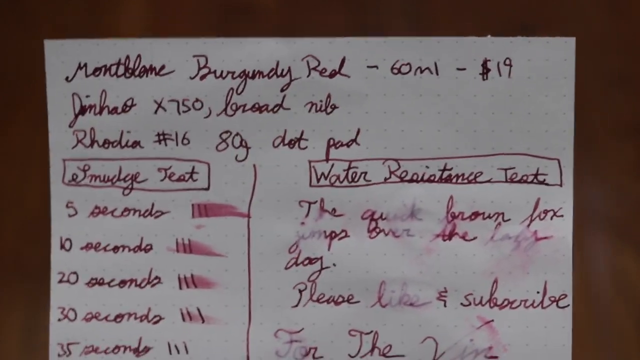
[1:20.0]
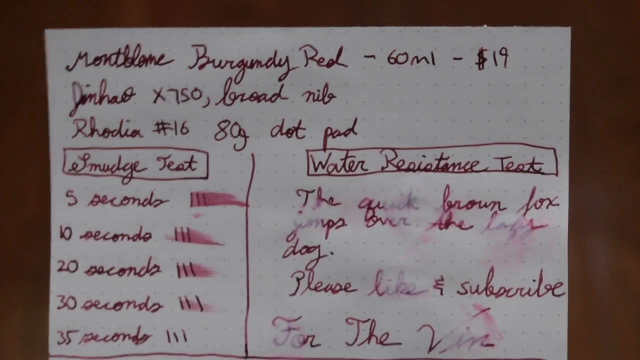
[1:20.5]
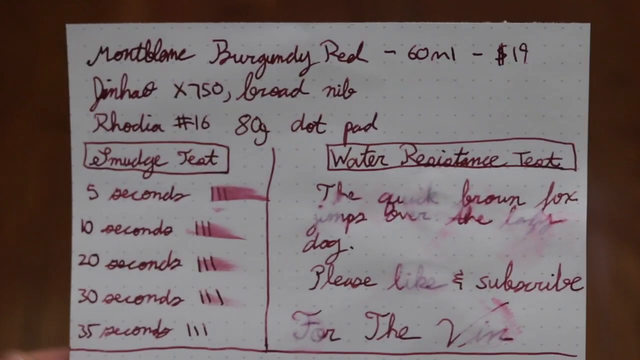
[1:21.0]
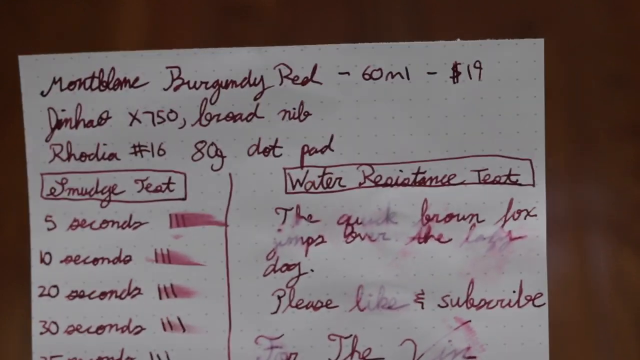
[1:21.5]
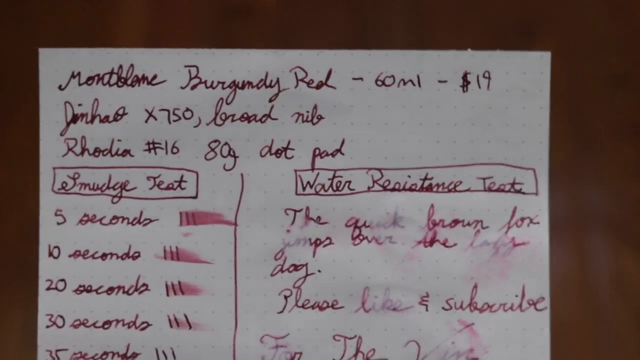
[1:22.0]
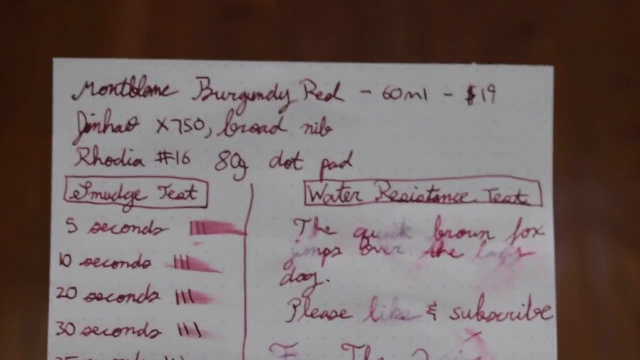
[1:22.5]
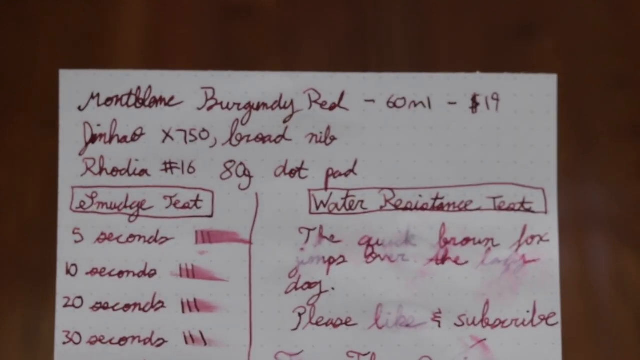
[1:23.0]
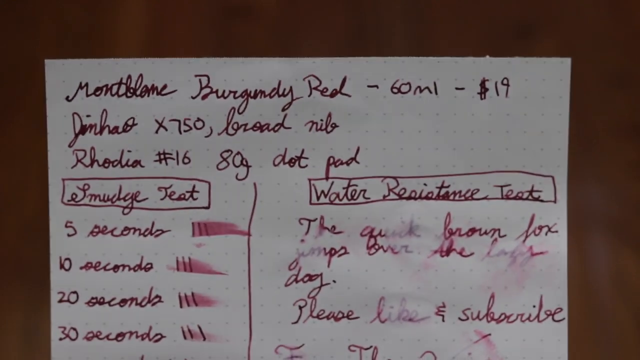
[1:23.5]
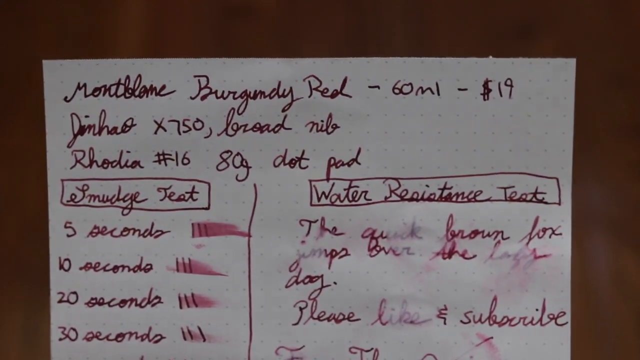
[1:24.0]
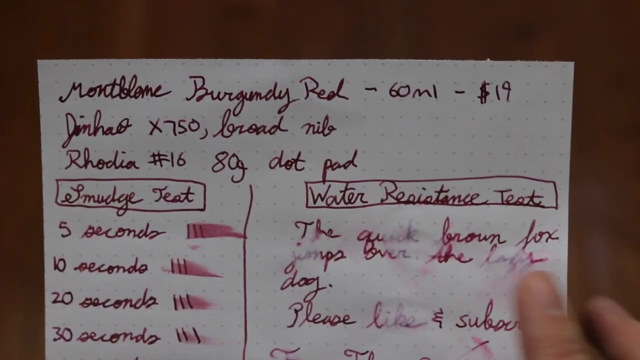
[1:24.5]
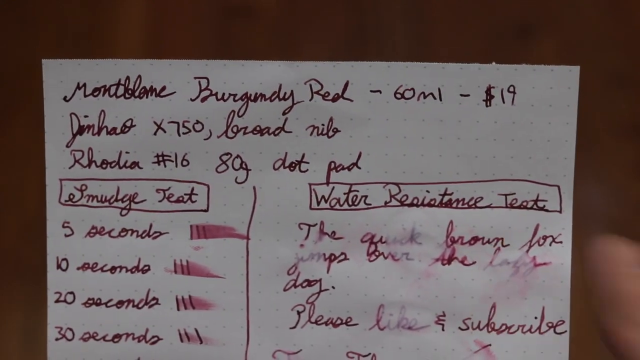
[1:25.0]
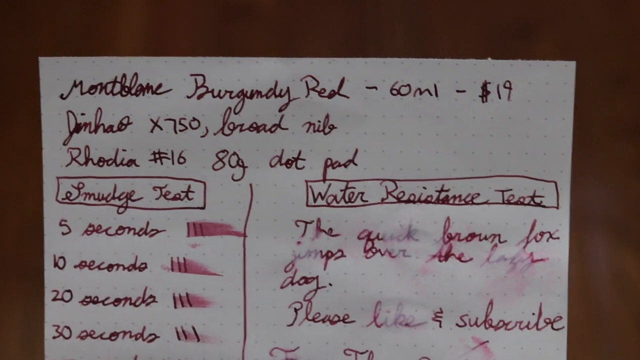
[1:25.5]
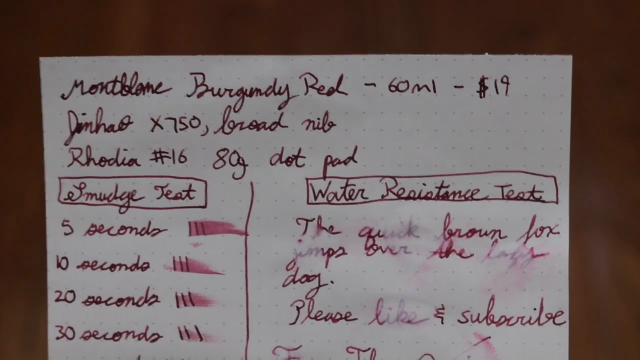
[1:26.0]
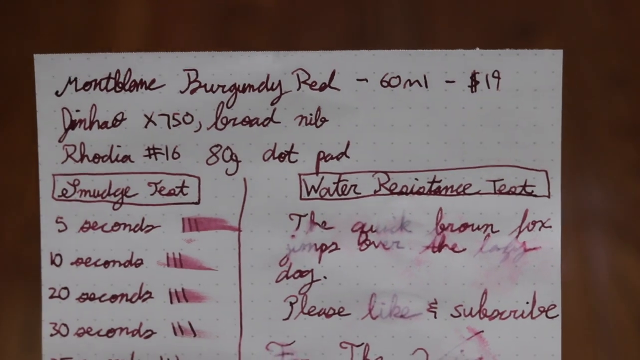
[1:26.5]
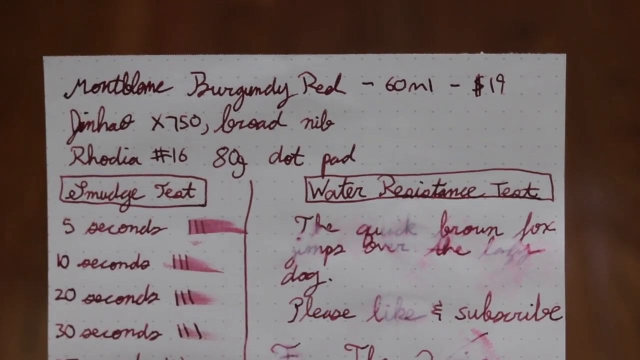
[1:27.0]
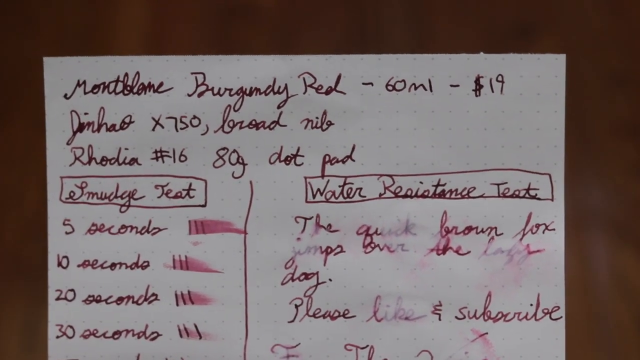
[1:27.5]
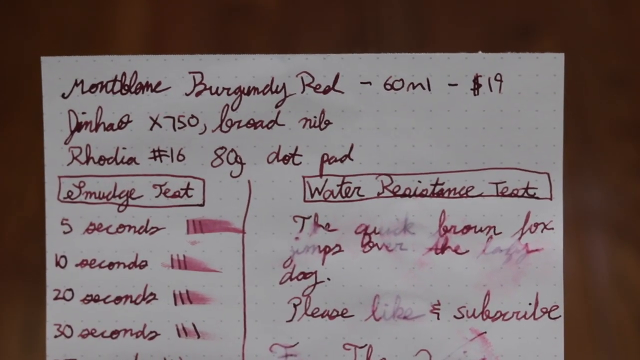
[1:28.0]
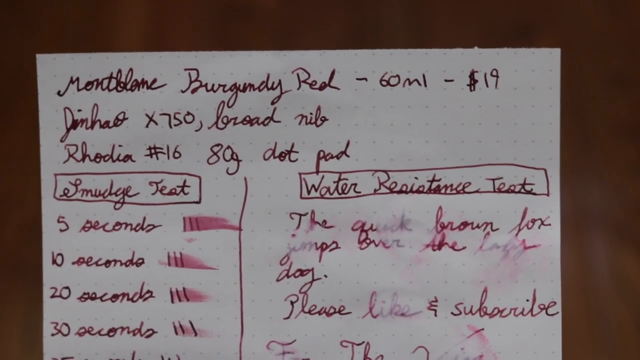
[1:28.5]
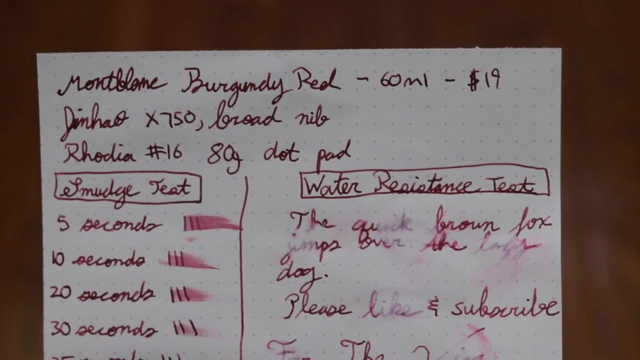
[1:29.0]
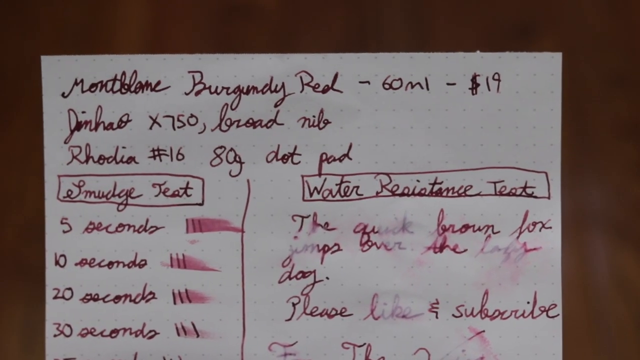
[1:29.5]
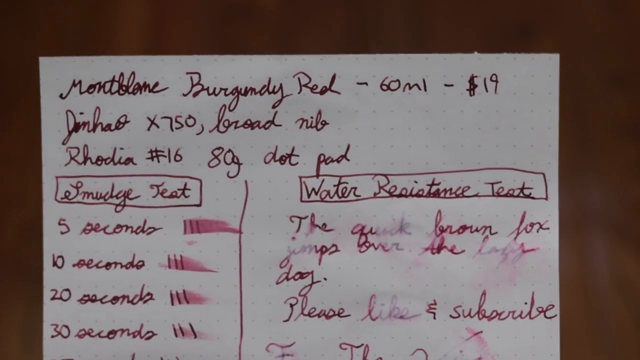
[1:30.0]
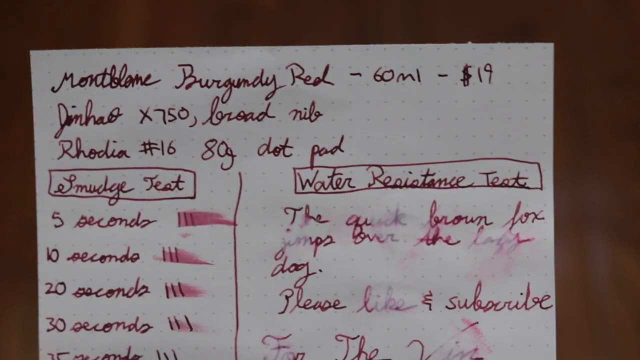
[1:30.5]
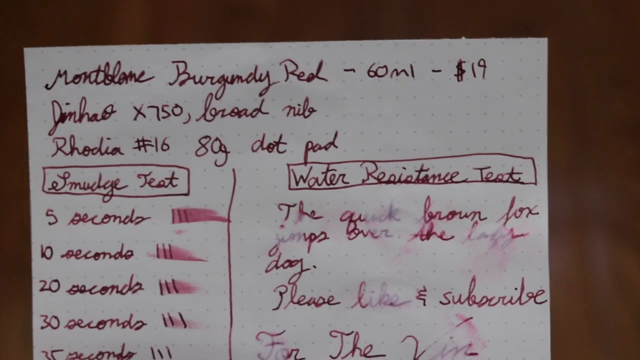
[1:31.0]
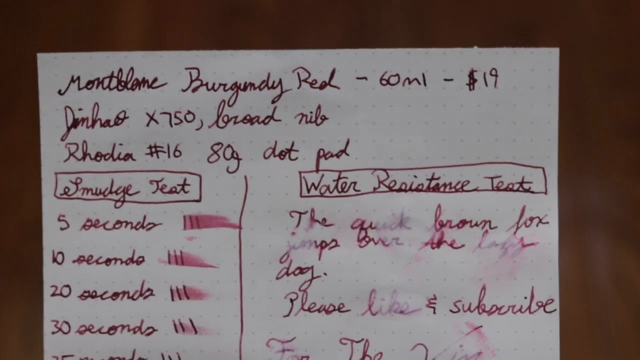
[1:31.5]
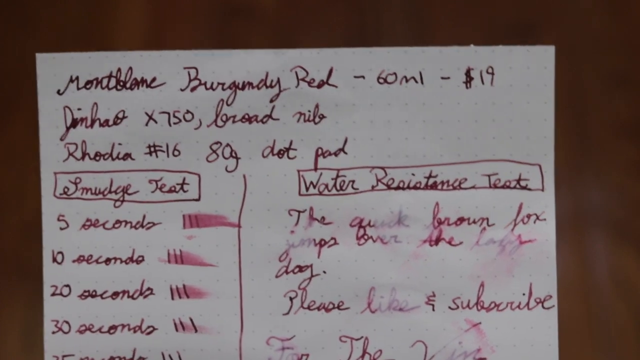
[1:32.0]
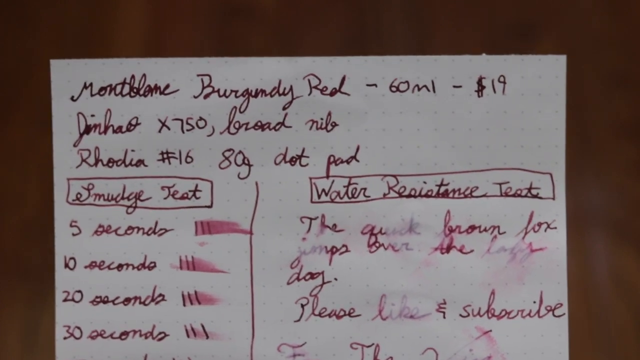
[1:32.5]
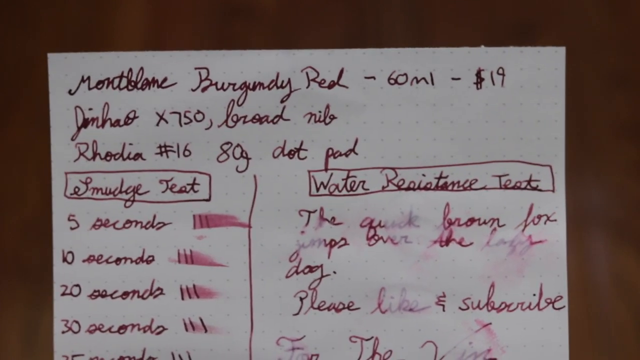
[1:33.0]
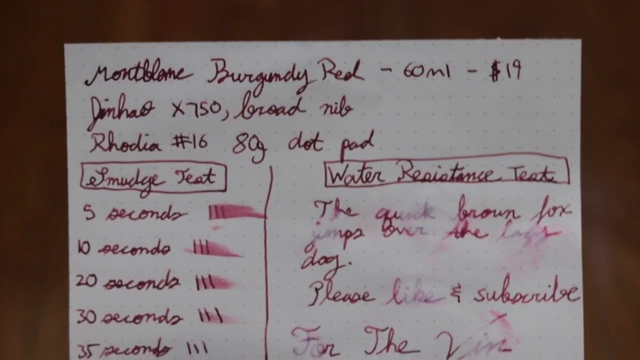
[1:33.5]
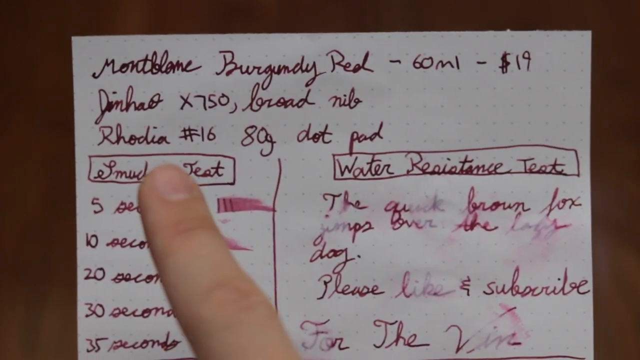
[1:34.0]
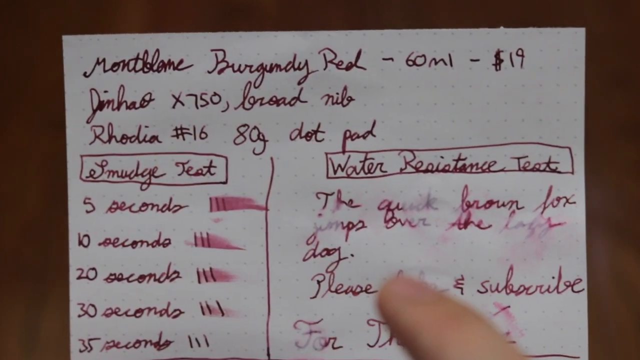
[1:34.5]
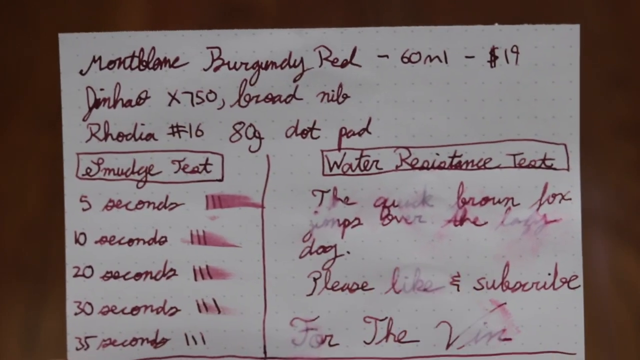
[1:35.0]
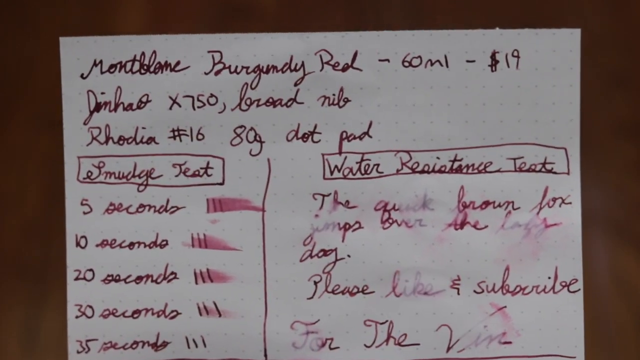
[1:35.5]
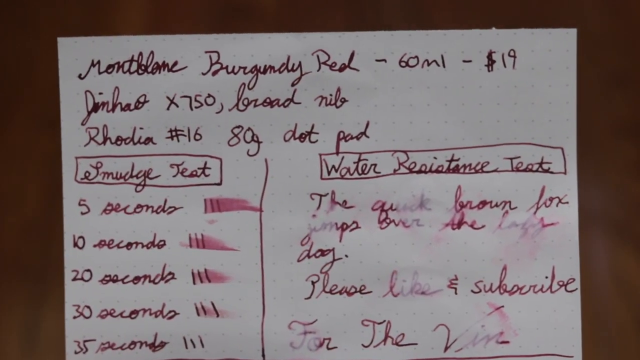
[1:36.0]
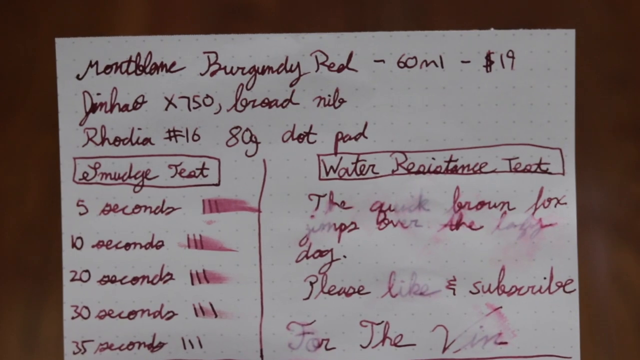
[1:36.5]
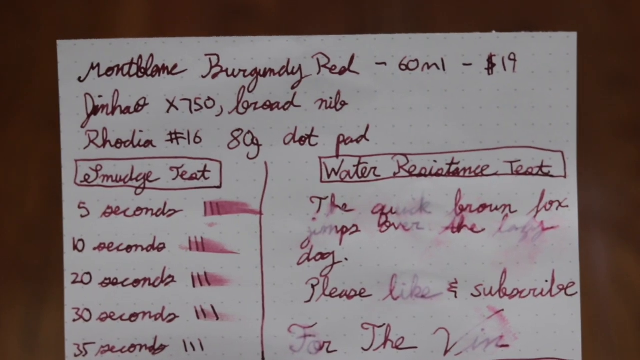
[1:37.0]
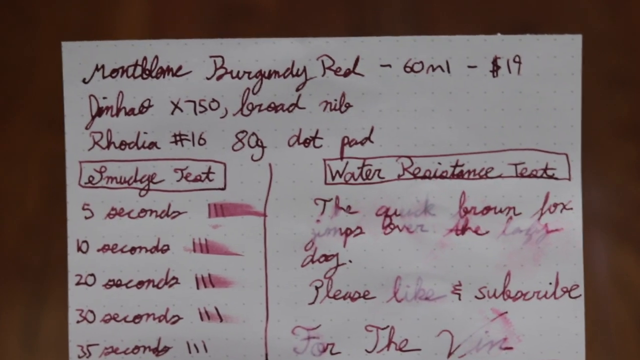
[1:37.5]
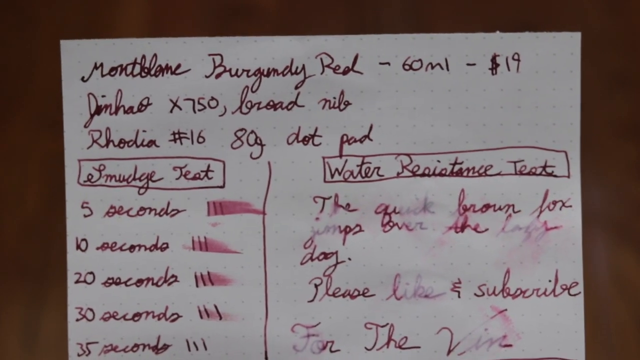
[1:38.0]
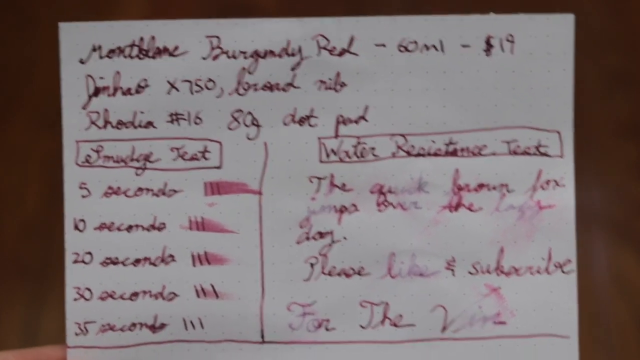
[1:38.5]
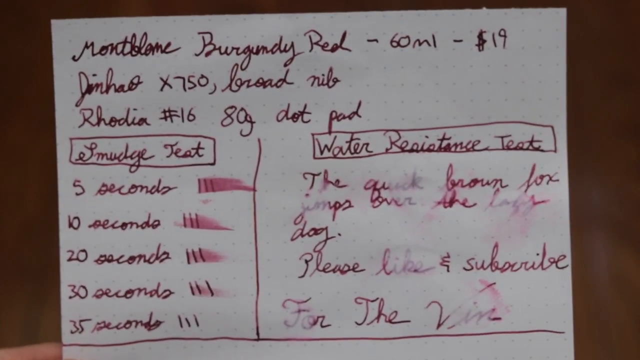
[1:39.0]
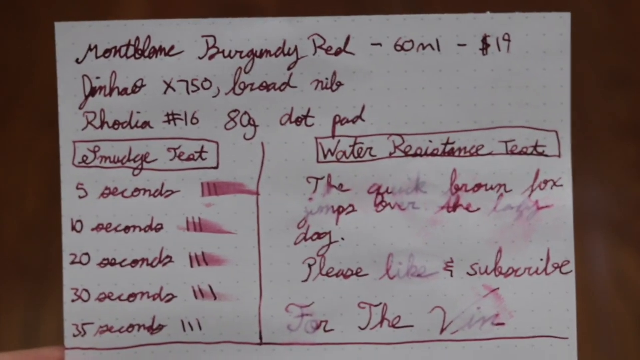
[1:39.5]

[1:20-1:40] The paper moves up and down as the presenter holds it. His right finger briefly points toward the paper and disappears, then appears again, points toward the third line, and disappears once more. The top line reads "Mont Blanc Burgundy Red", followed by a handwritten dash, then "60 ml", another handwritten dash, and "$19" written in the upper right-hand corner. All of the writing appears to be in the burgundy red color of the ink bottle. On the left-hand side of the paper, "smudge test" is written in cursive inside a handwritten box, and on the right-hand side "Water Resistant Test" is also written in cursive inside a handwritten box.